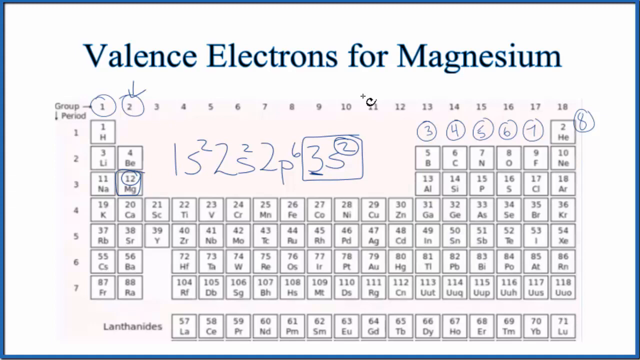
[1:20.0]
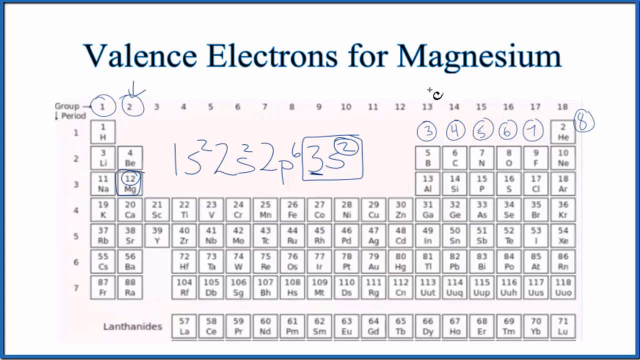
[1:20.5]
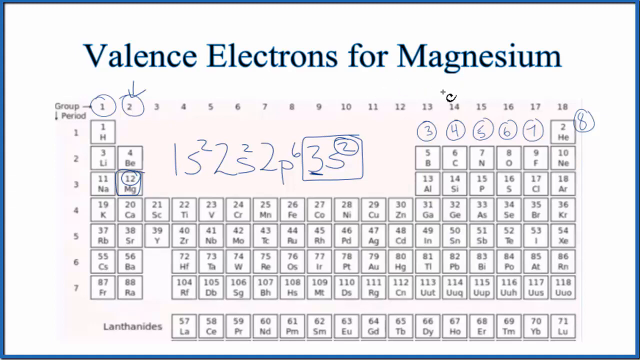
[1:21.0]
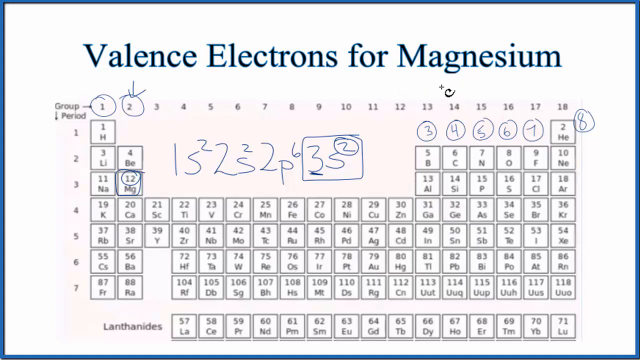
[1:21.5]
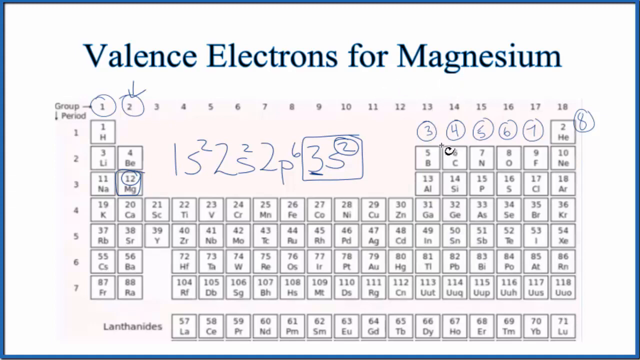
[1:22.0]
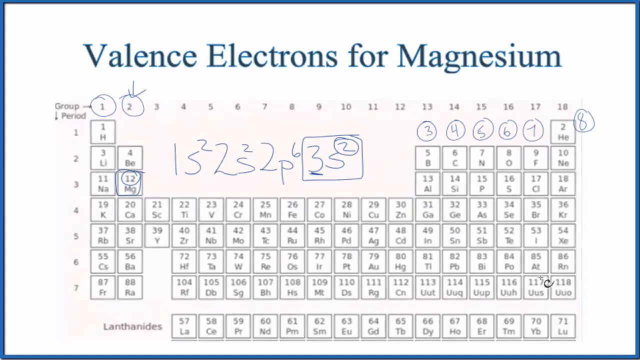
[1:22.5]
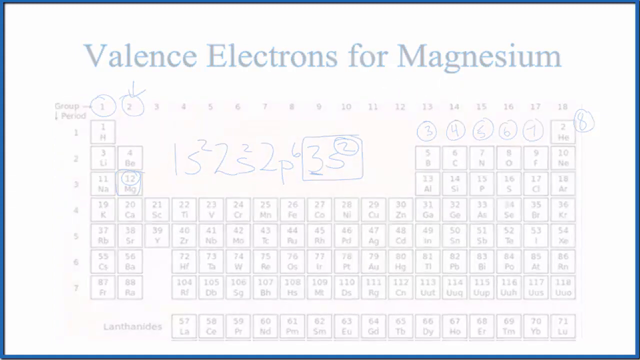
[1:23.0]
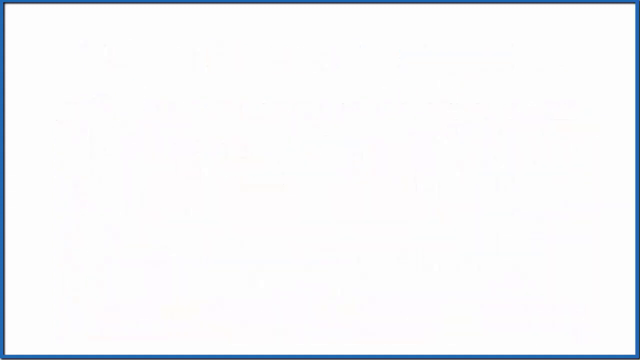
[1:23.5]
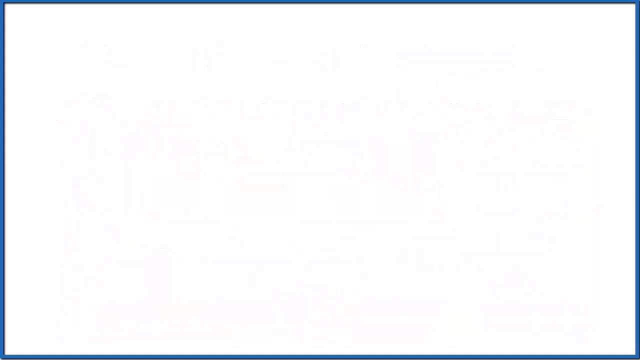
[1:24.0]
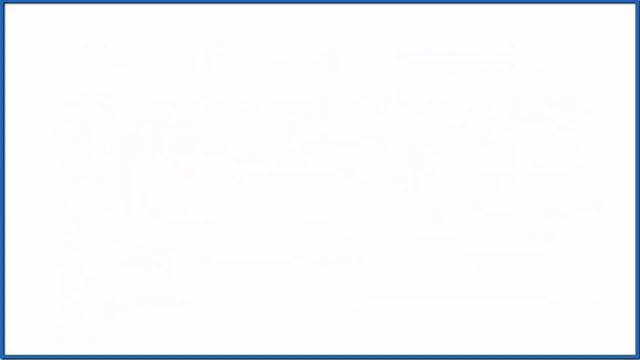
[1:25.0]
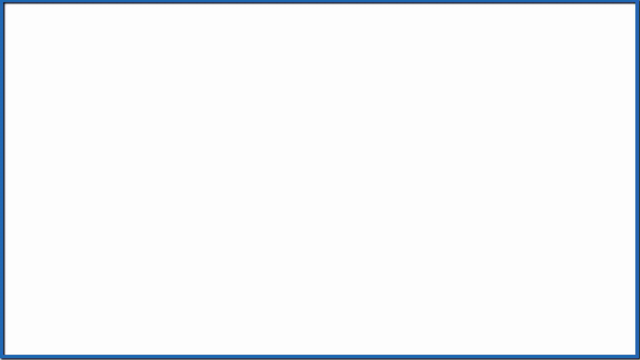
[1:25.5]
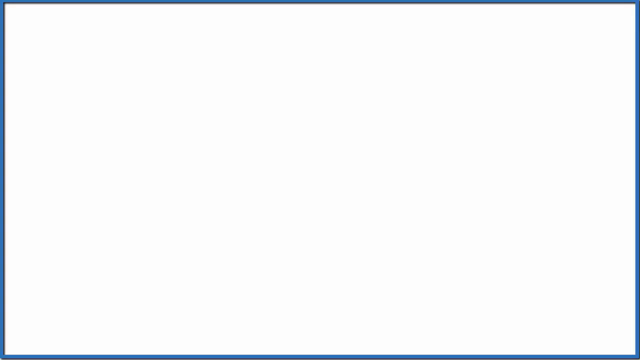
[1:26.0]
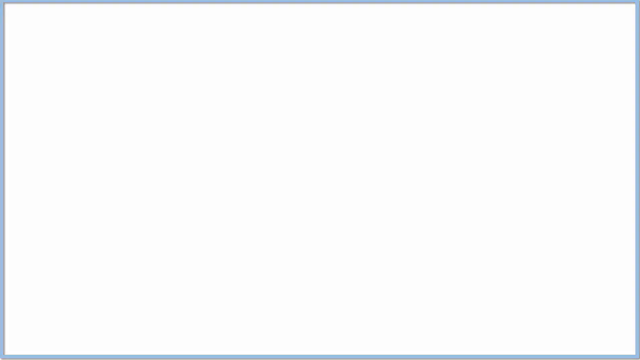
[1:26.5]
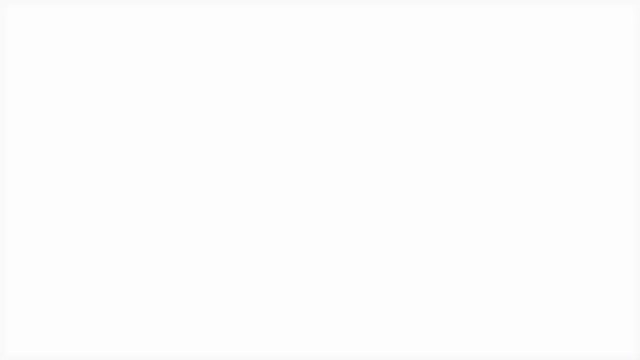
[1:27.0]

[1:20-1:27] A periodic table is on a white background, with a title at the top reading "valence electrons for magnesium." Blue markings appear all over the table: the numbers 1 and 2 at the top are circled, and below columns 13 through 18 the numbers 3, 4, 5, 6, 7 and 8 are each individually circled. In the space in the middle of the table, blue text reads 1s squared, 2s squared, 2p to the 6th and 3s squared. The 3 of 3s is underlined, the 2 of s squared is circled, and a blue square is drawn around the 3s squared. On magnesium, element 12, the number 12 is circled and the magnesium is circled with a blue line too. A cursor that looks like a plus sign with a C at its bottom right moves around and toward the bottom right, and then the video fades to white.